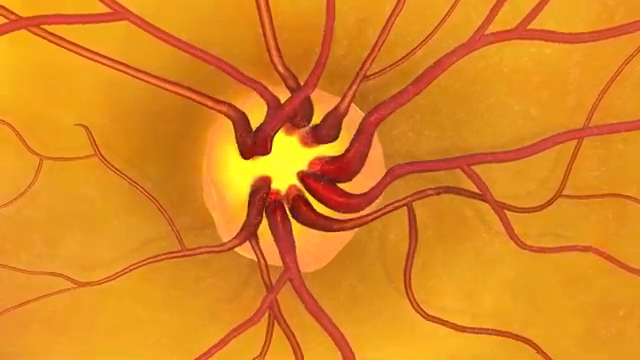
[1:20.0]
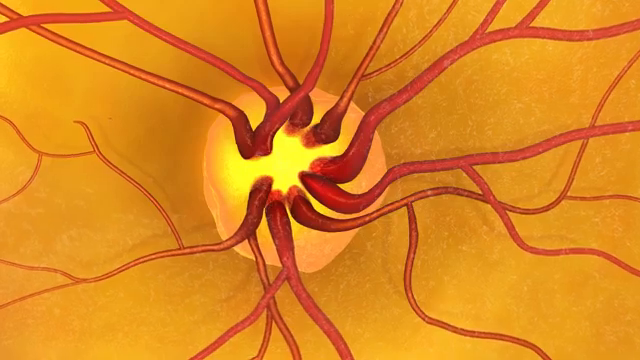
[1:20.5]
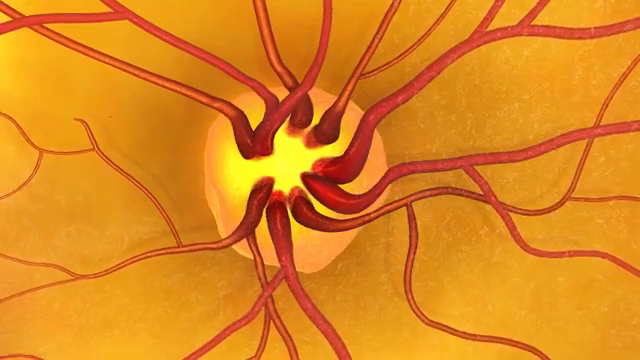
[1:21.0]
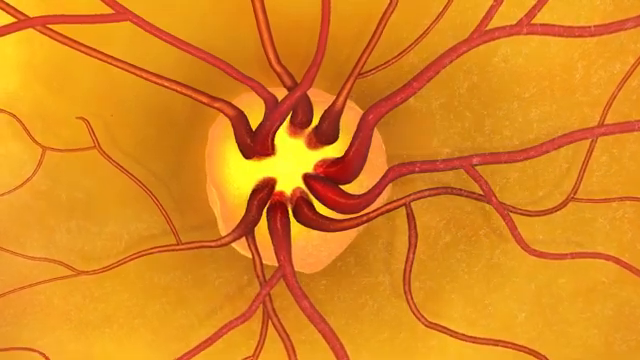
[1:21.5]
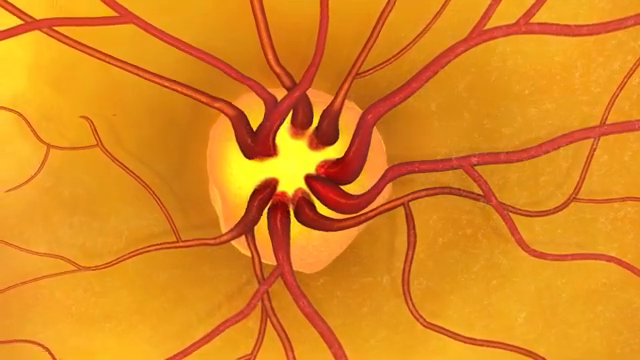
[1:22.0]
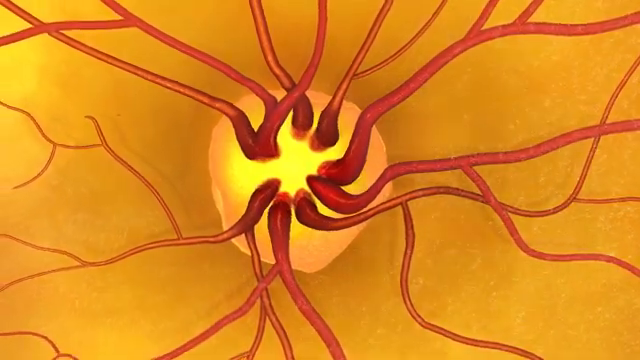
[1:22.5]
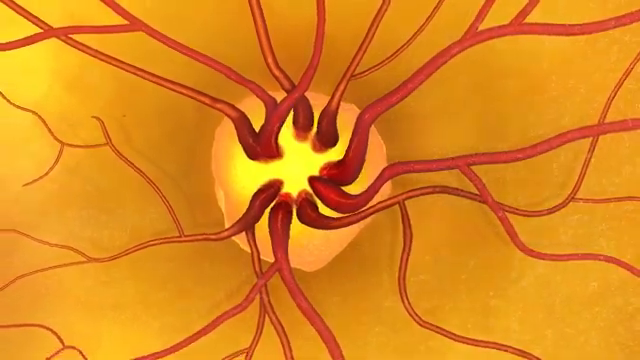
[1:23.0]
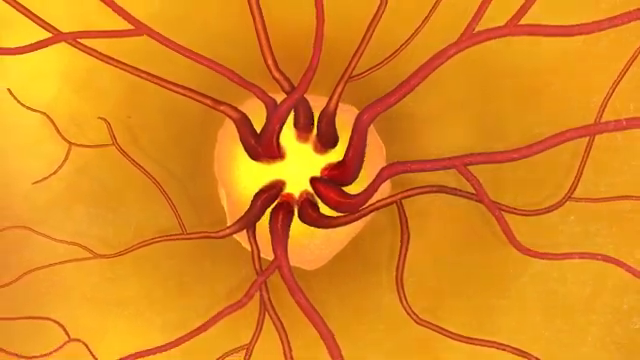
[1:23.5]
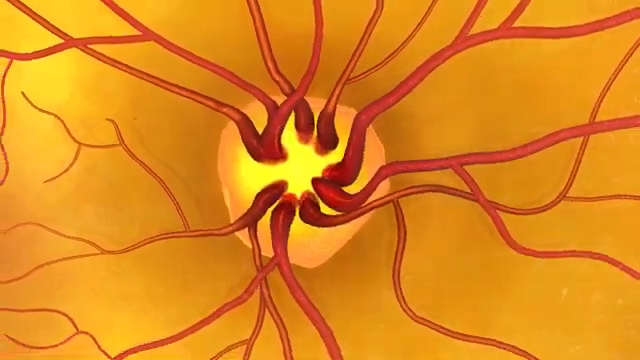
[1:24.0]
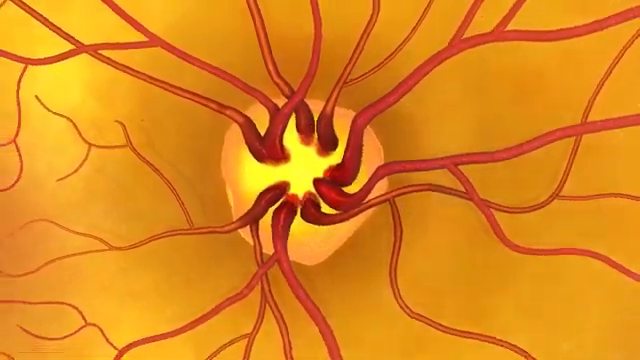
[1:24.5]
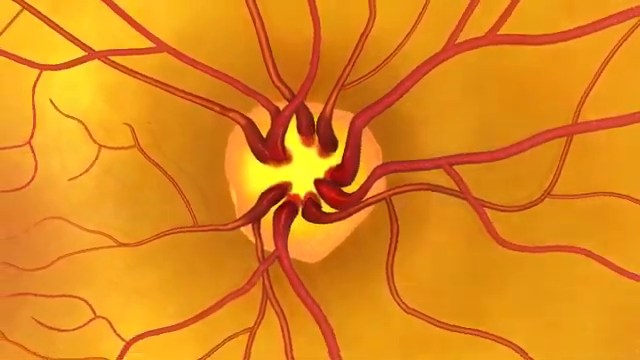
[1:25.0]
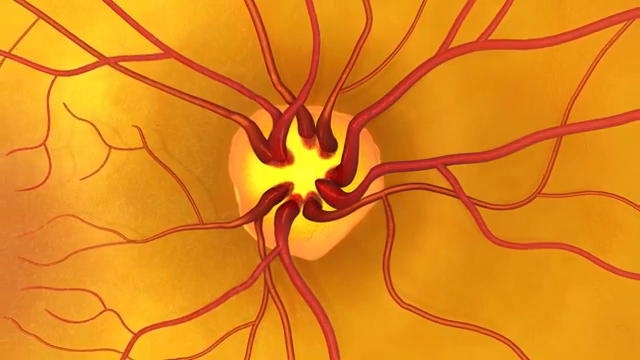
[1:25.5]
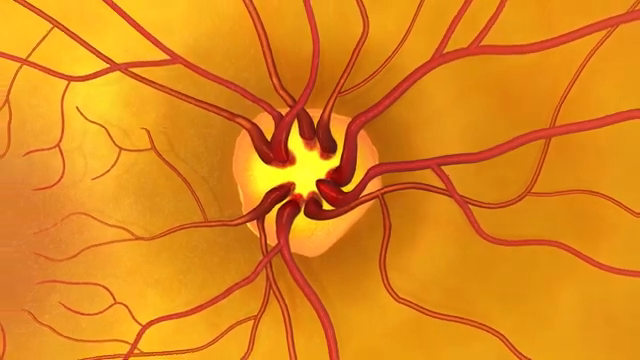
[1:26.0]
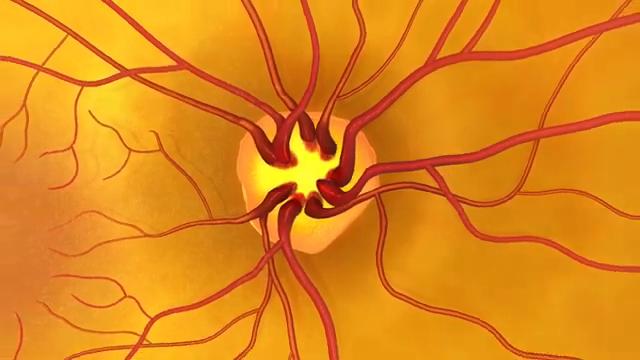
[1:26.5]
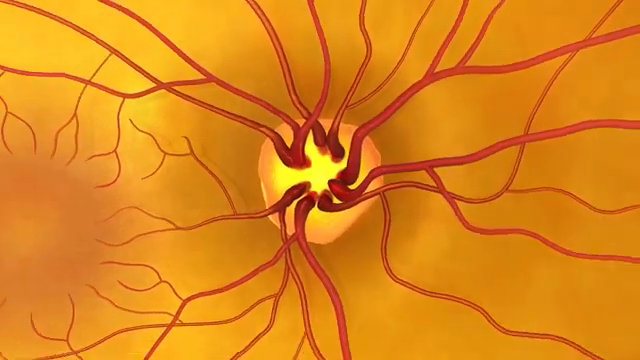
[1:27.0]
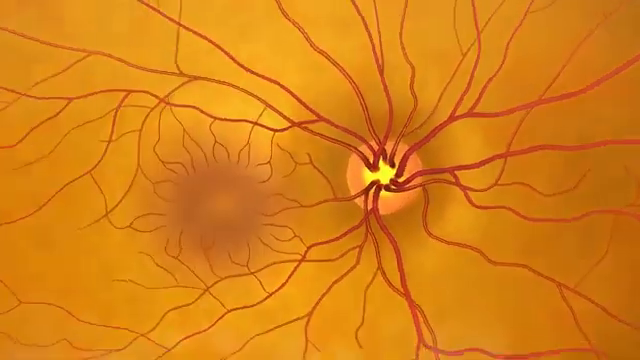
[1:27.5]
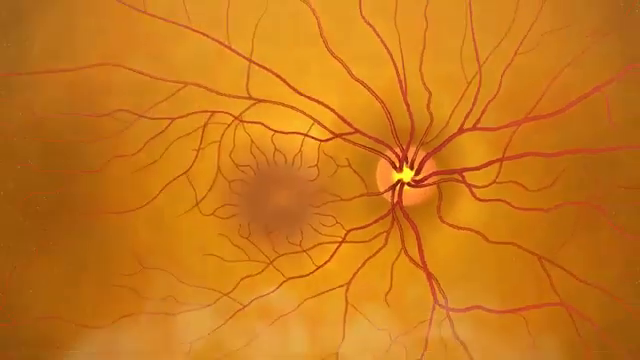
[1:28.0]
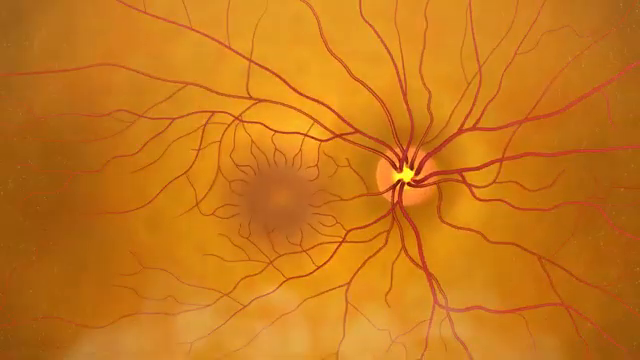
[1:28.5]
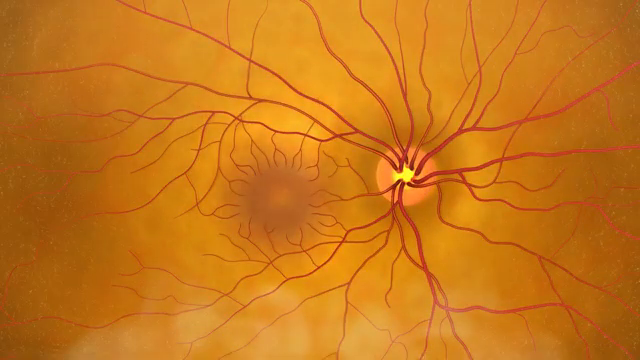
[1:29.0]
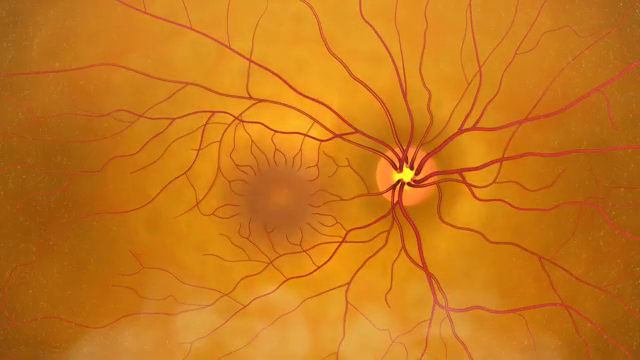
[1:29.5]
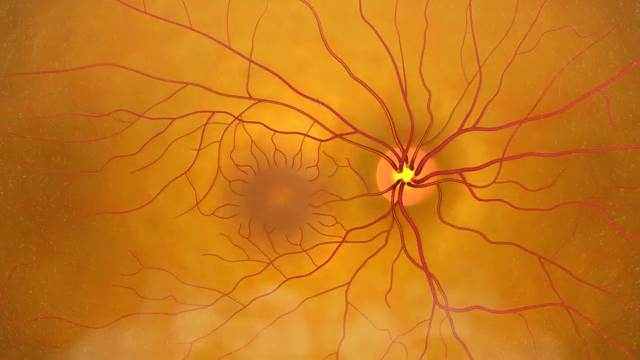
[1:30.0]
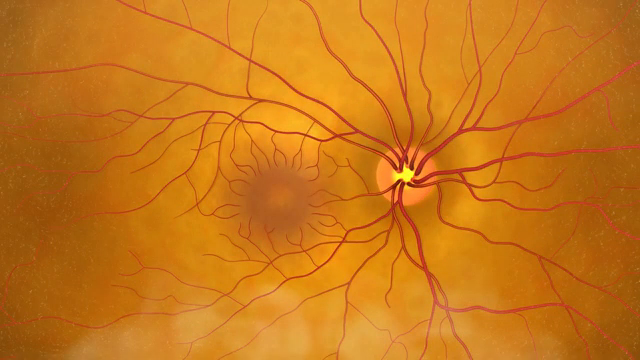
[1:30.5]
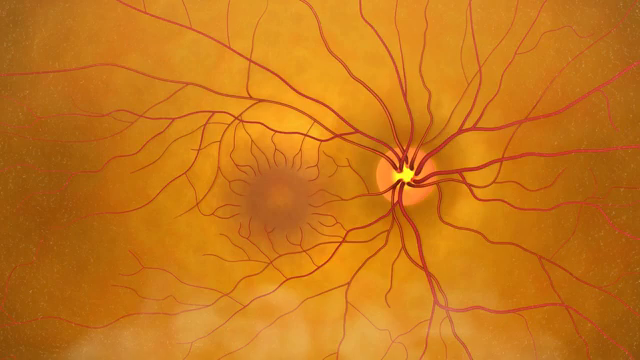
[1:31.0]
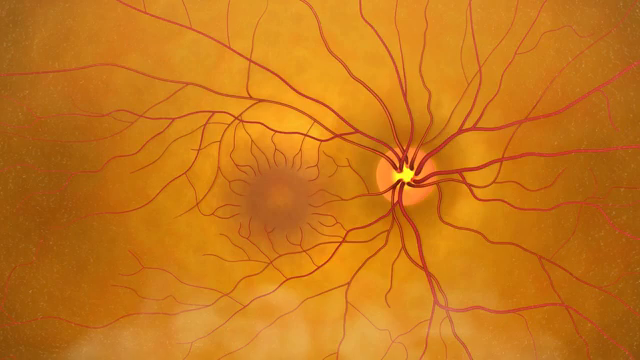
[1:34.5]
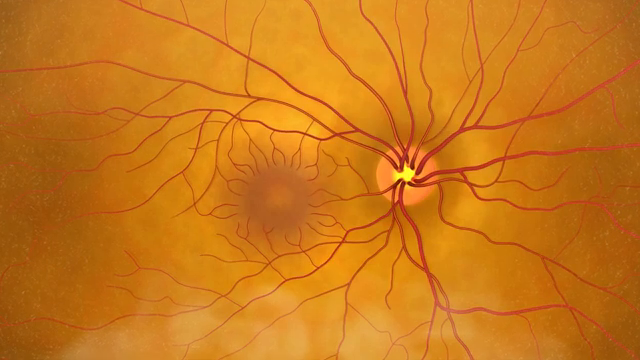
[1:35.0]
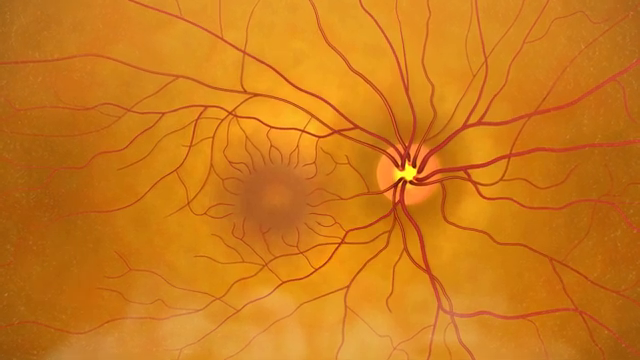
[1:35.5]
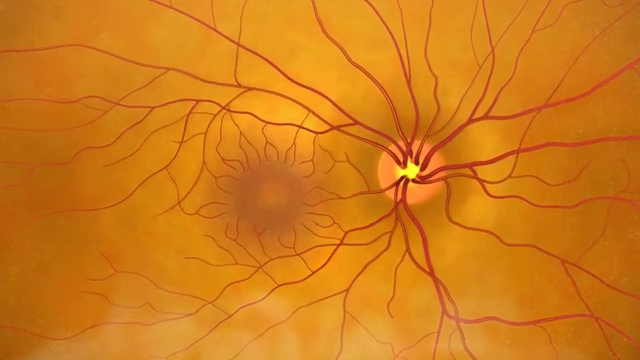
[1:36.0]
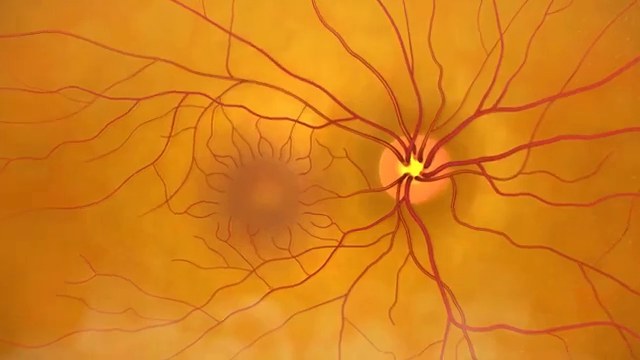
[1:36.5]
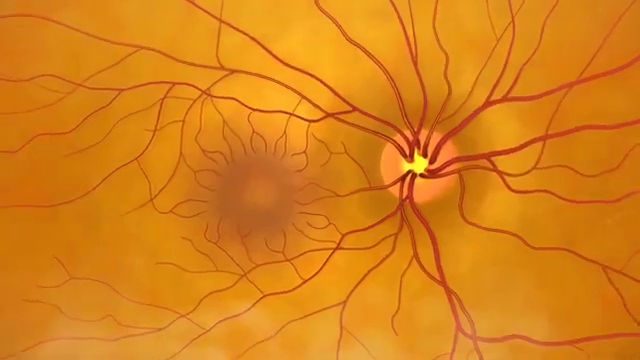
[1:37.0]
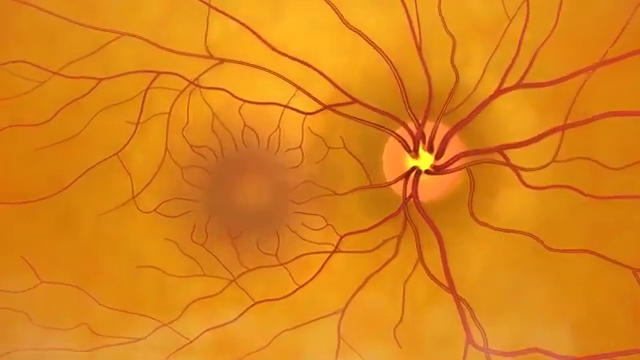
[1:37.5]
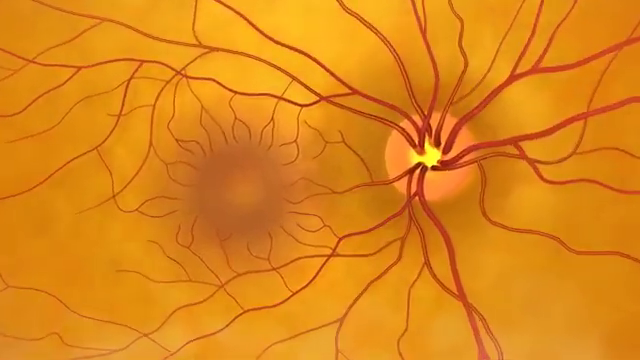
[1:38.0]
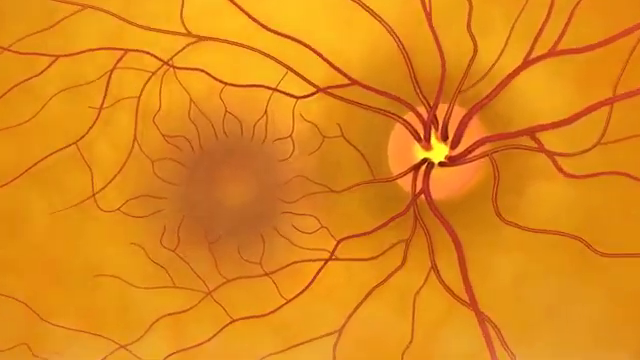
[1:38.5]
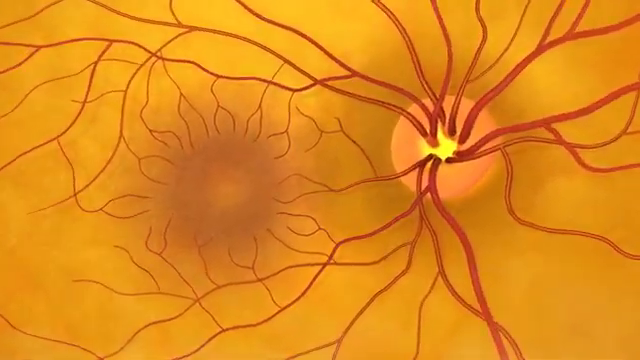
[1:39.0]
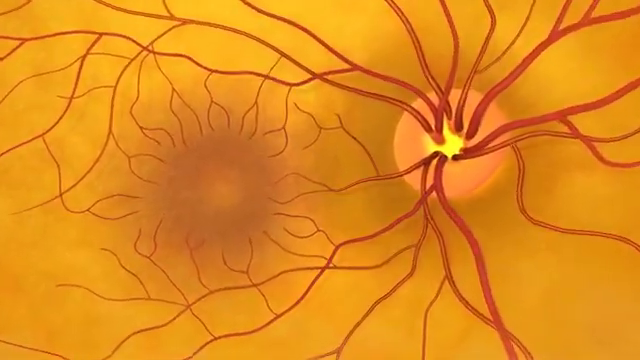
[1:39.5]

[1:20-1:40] A yellow light flashes right in the middle of the scene while red blood vessels exit the site and move out in different directions. The macula and the retina are also shown. The camera starts very close up to the iris and then slowly zooms out to reveal more and more of the area, with the blood vessels entering it. In the 3D animation the blood vessels are uneven: some have many branches coming off them, while others have very few.